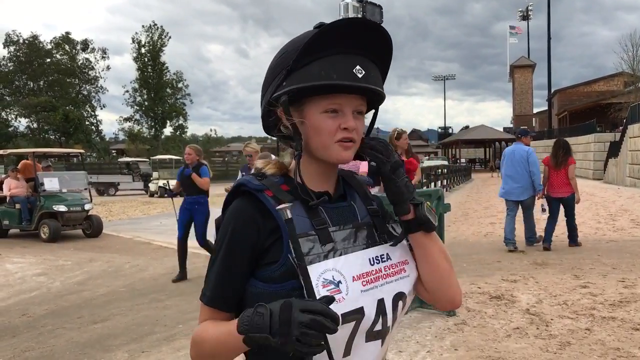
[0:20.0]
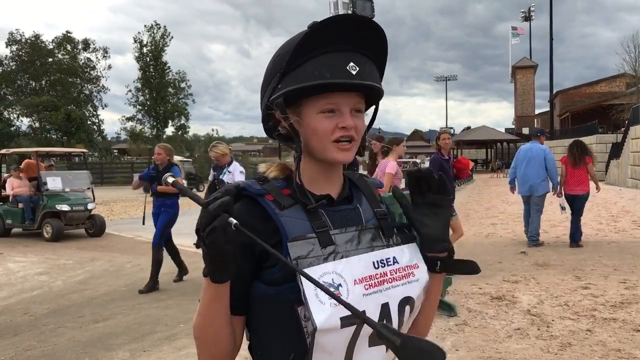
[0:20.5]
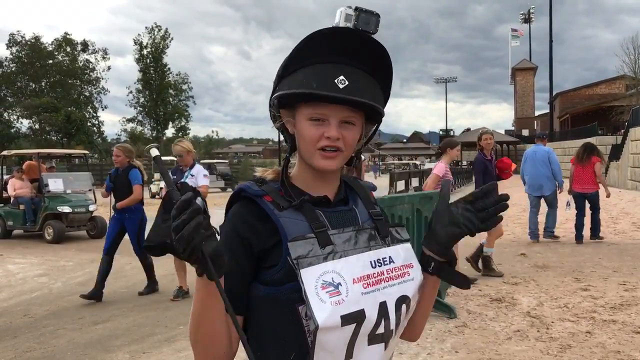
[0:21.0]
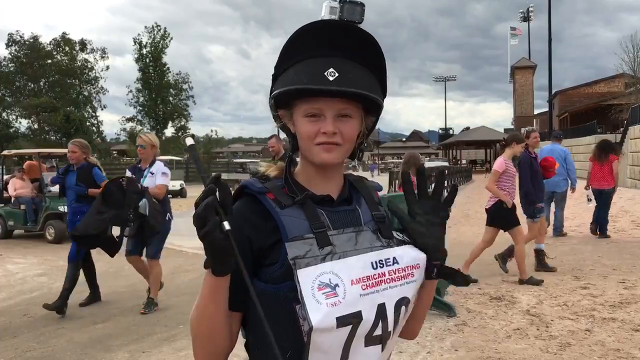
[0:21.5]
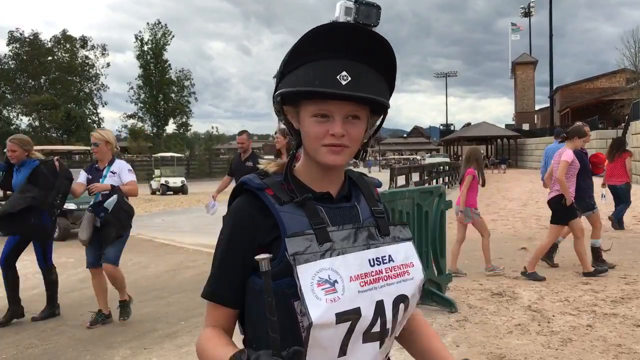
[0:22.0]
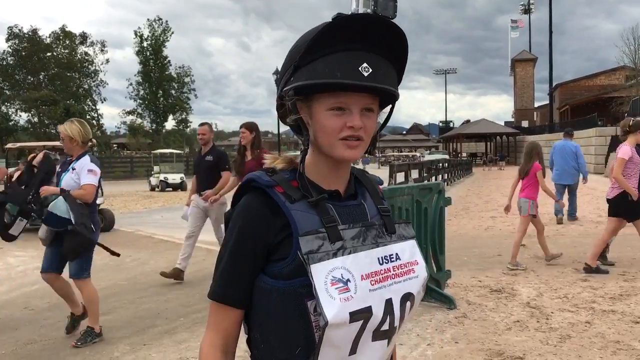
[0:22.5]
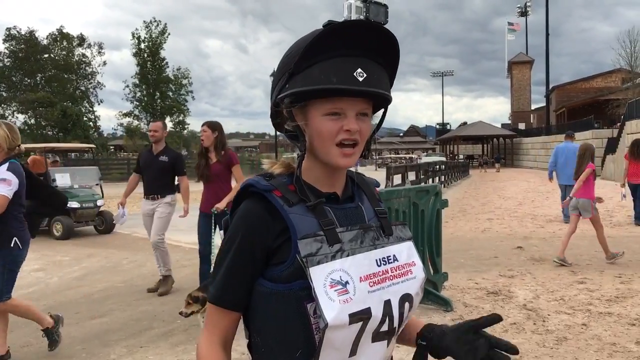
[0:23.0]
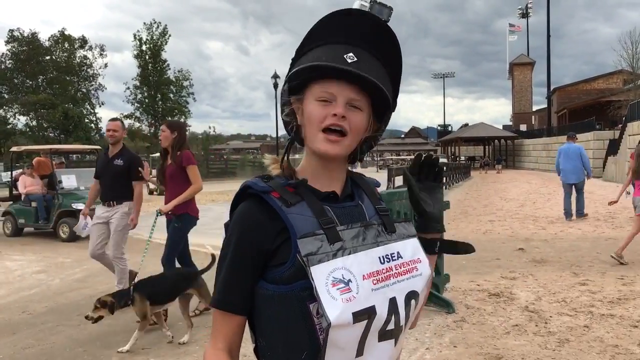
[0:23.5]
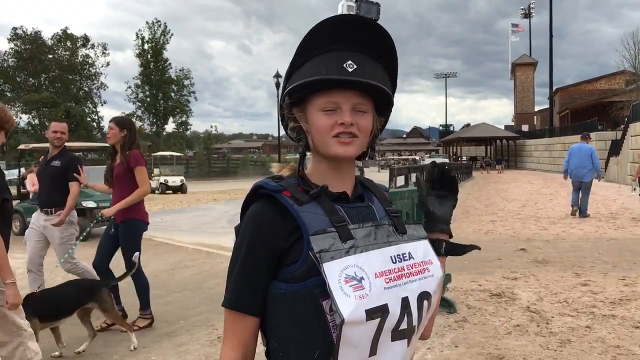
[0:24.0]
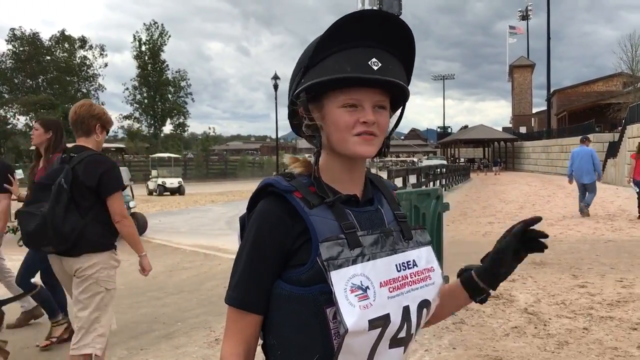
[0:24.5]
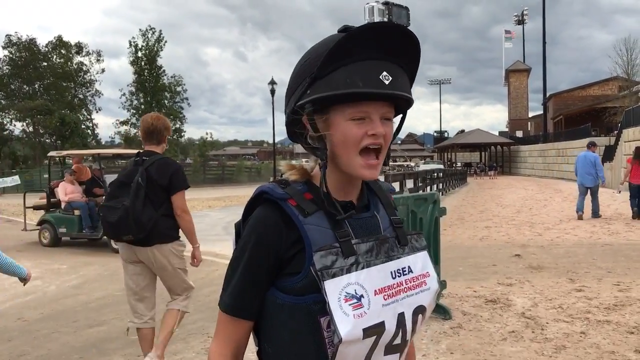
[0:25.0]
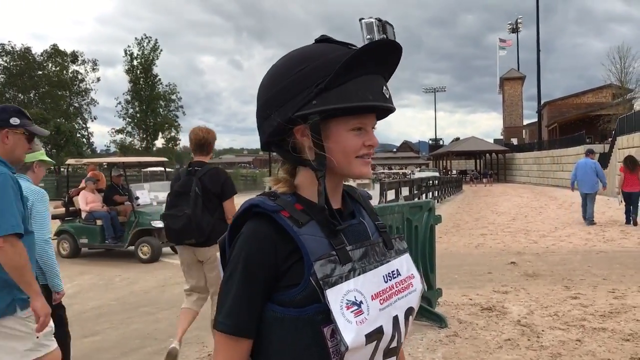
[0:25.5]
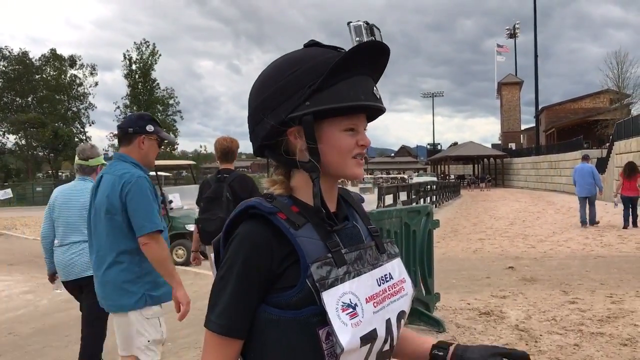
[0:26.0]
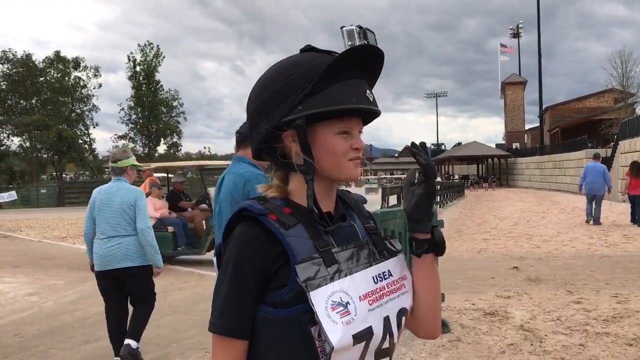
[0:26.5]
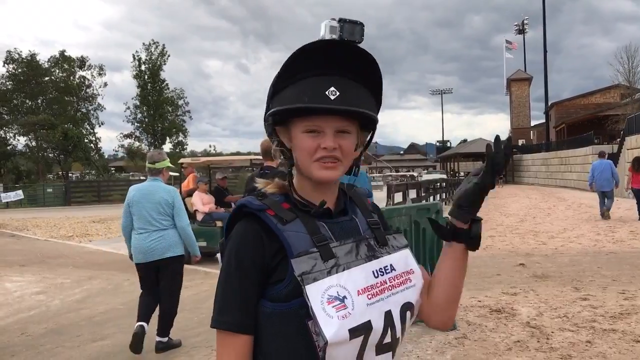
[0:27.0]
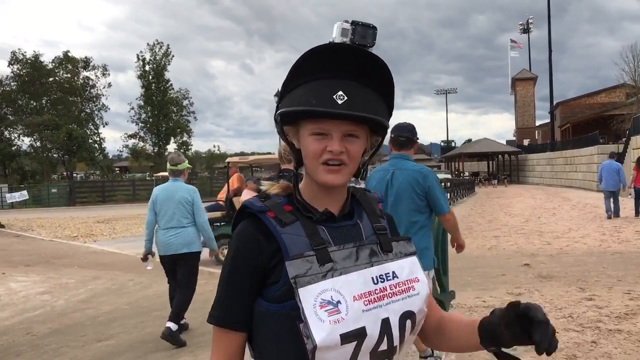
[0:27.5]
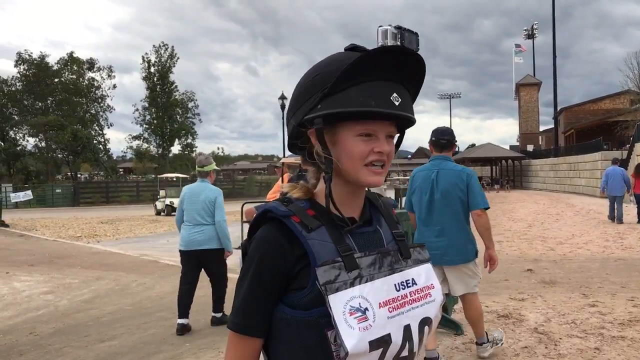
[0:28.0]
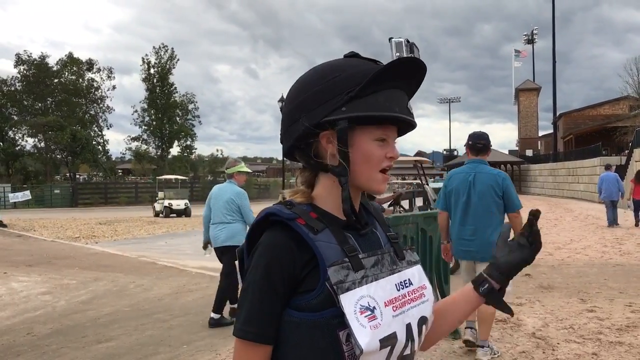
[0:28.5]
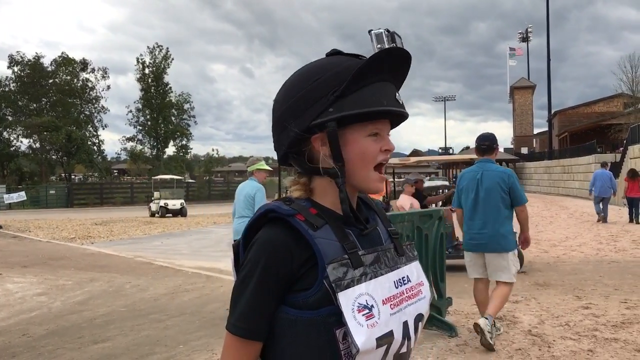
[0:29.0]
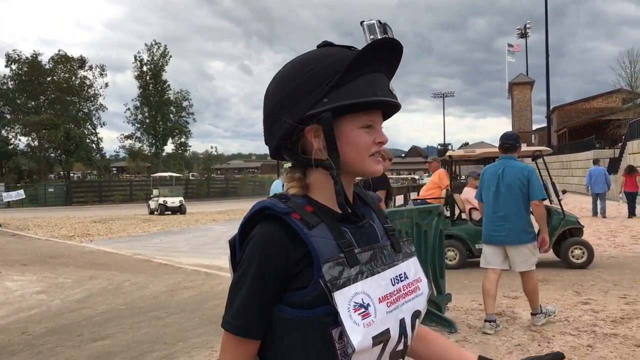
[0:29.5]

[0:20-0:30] The young girl wears the riding hat with the camera on top and holds the riding crop in her right hand. Her outfit is kind of like body armor, apparently a navy horse riding uniform, with a white label stuck to it that reads "USEA American Eventing Championships 740". Several people walk around behind her from both sides, including someone walking a dog, and one person drives a golf cart in the background. As the girl talks to the camera, she moves her left hand up and flicks it outwards, moves it down to her side, lifts it up to her face, moves it down to her side again, lifts it briefly to point, and brings it back down to her side. Her right hand stays relatively stationary; the movement is mostly with her left hand.